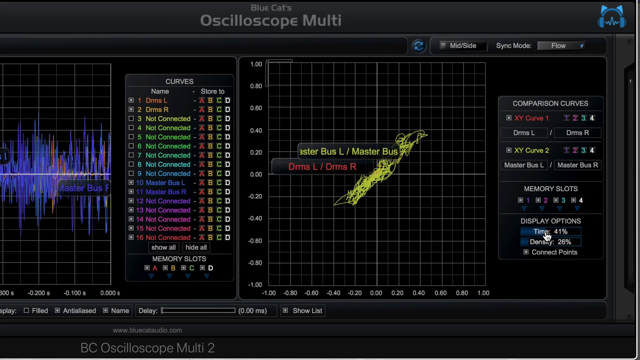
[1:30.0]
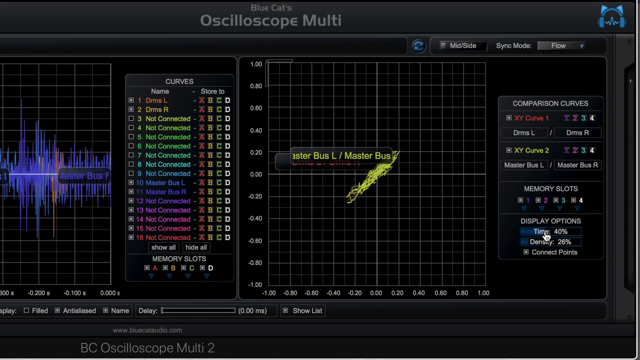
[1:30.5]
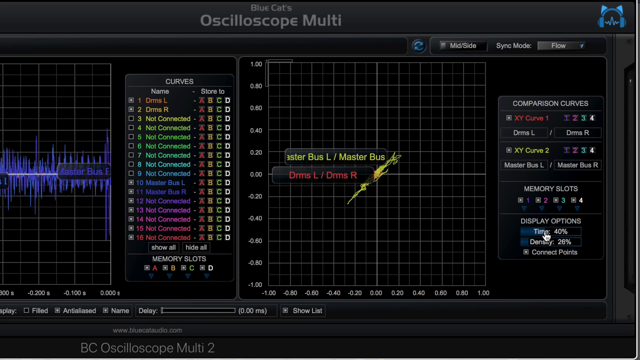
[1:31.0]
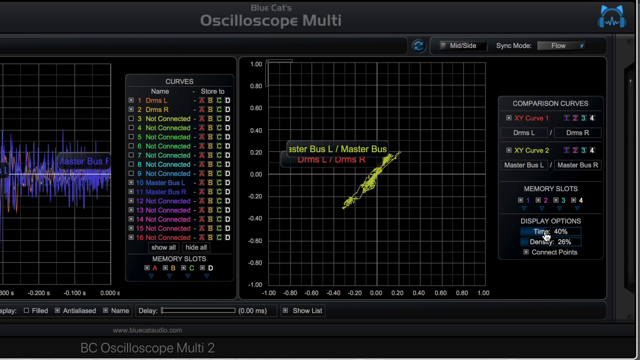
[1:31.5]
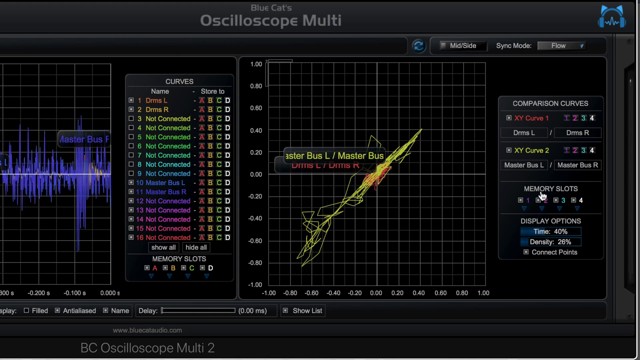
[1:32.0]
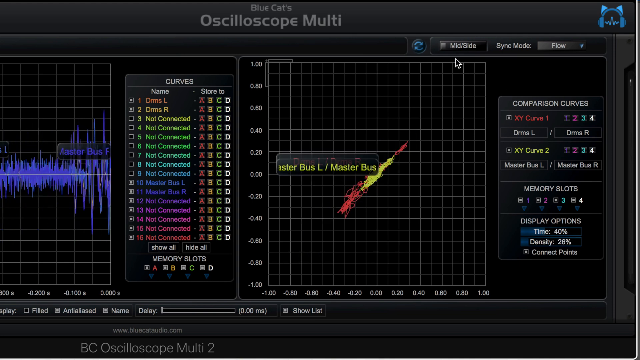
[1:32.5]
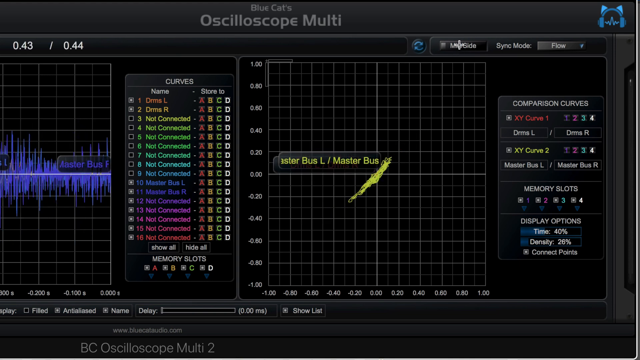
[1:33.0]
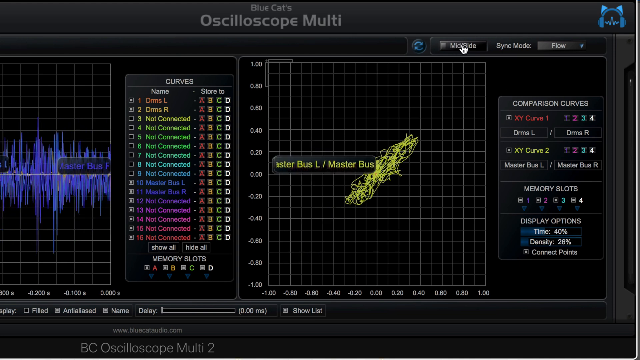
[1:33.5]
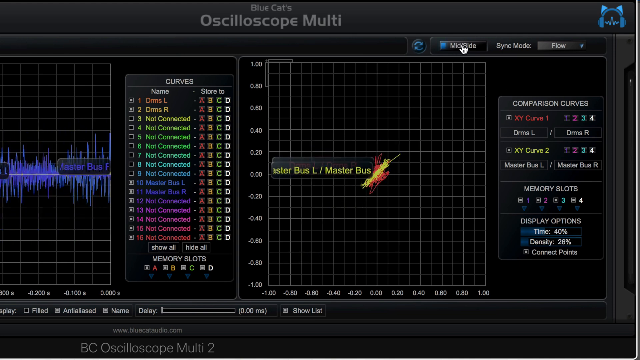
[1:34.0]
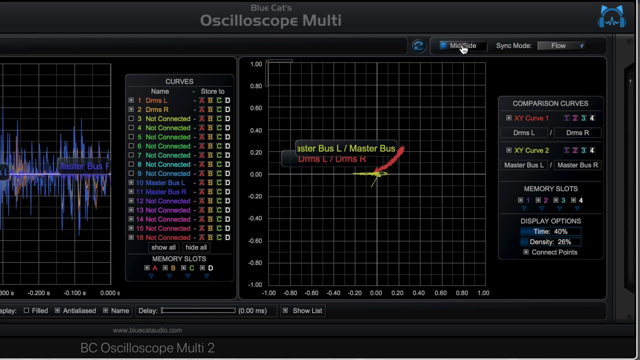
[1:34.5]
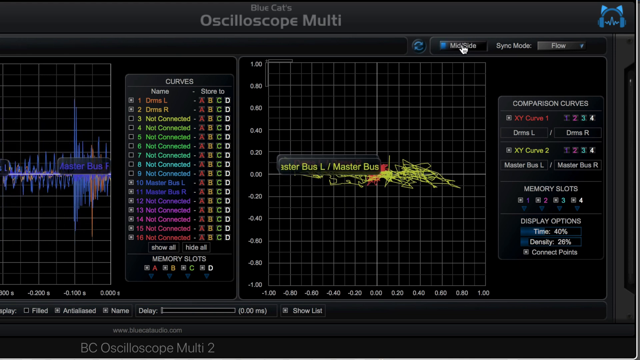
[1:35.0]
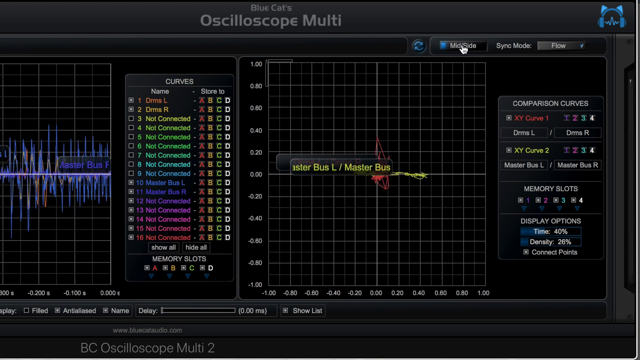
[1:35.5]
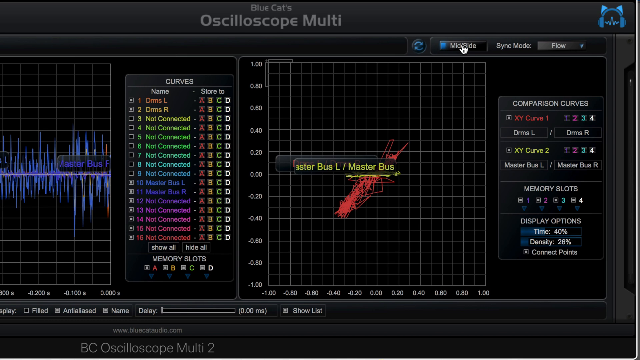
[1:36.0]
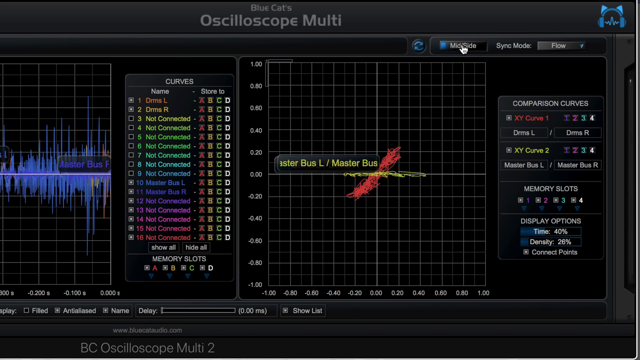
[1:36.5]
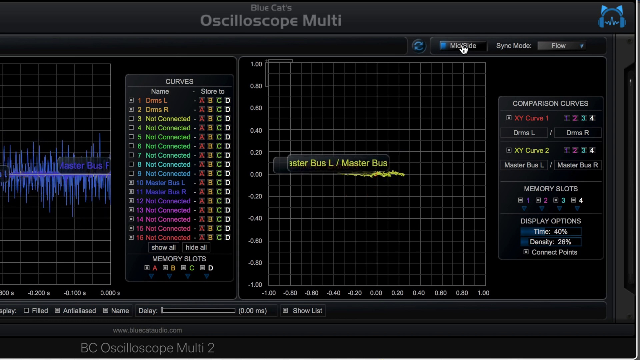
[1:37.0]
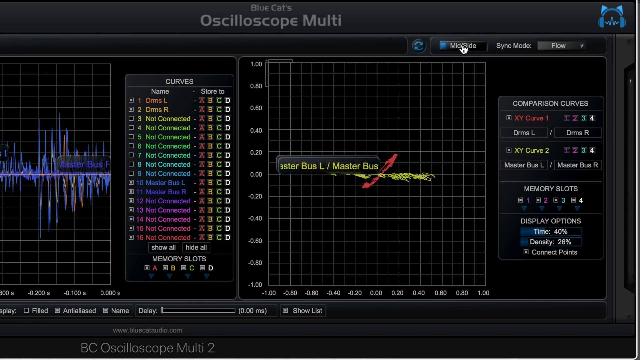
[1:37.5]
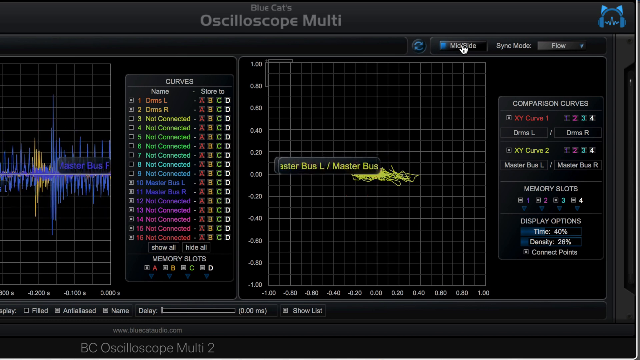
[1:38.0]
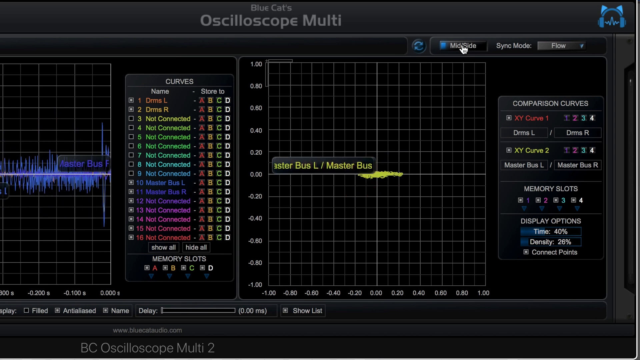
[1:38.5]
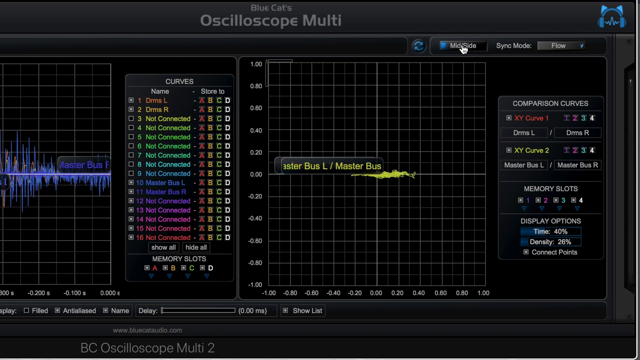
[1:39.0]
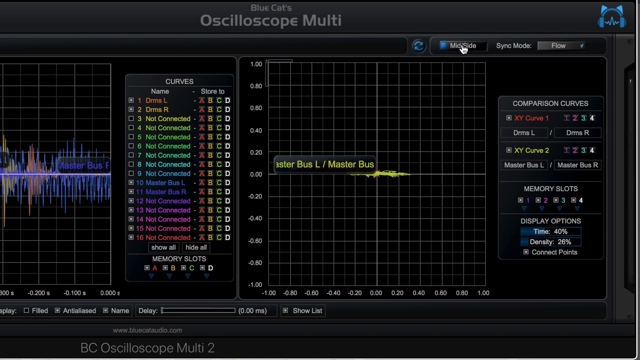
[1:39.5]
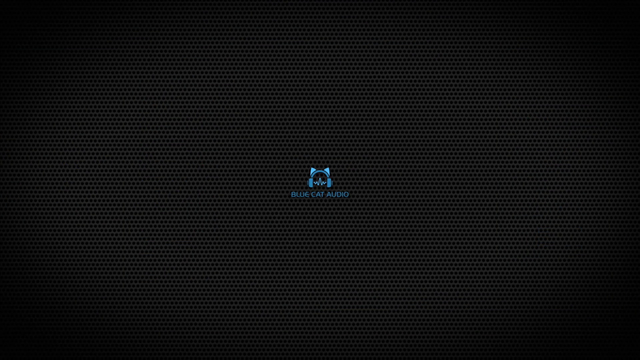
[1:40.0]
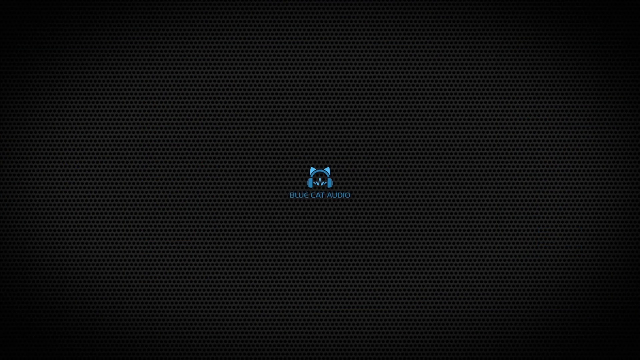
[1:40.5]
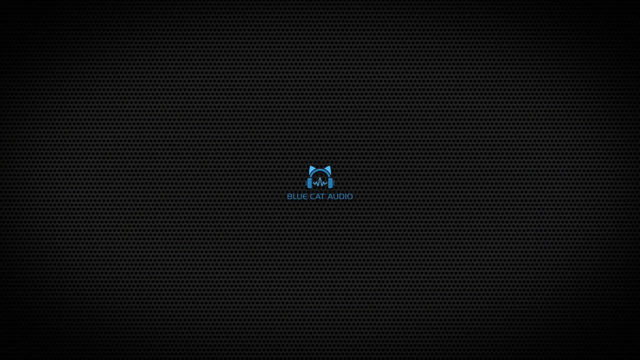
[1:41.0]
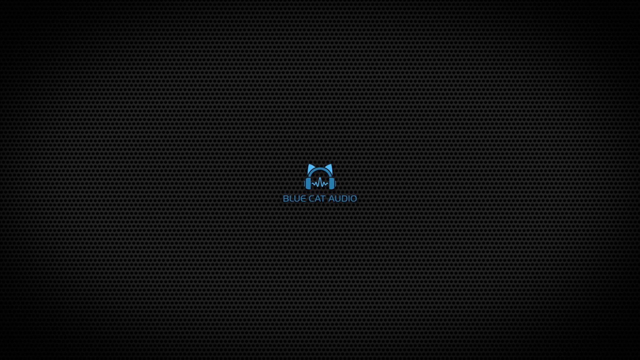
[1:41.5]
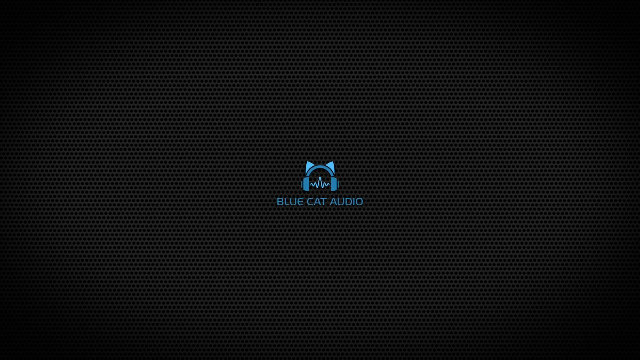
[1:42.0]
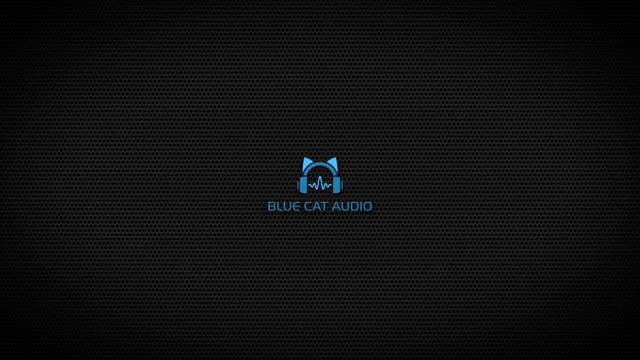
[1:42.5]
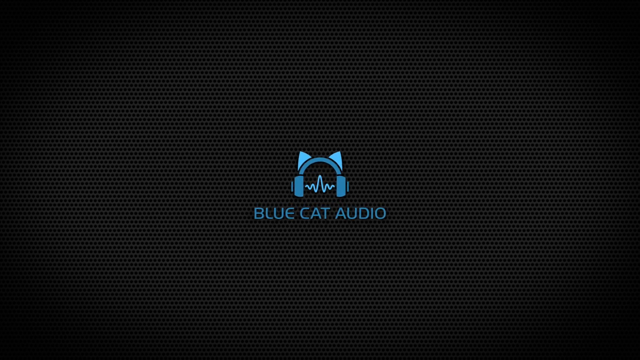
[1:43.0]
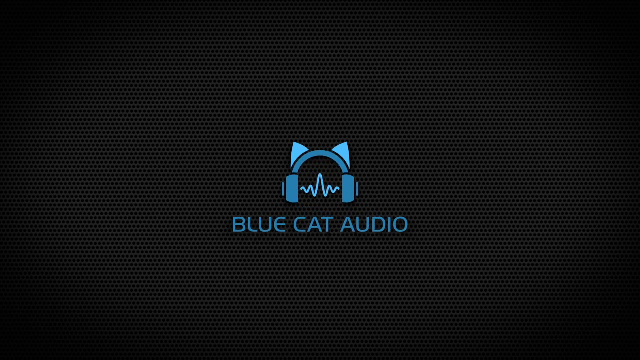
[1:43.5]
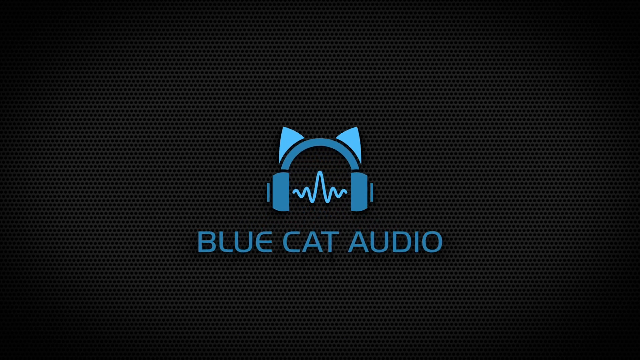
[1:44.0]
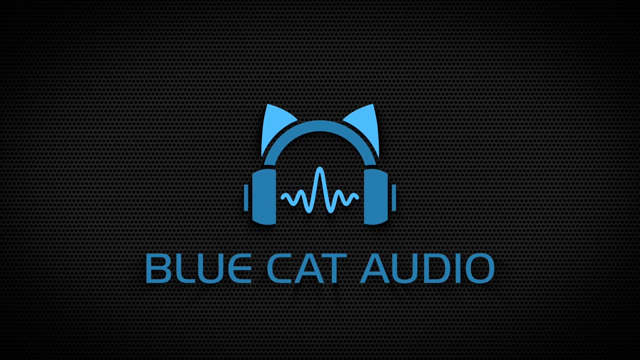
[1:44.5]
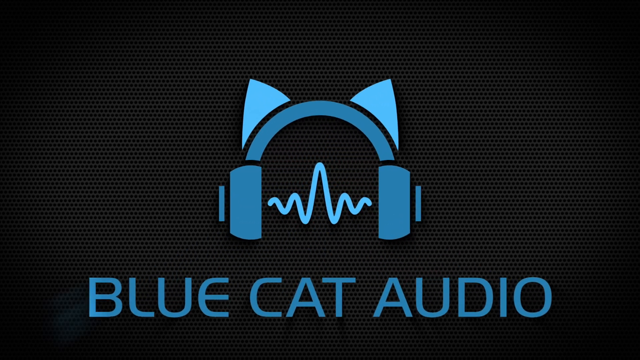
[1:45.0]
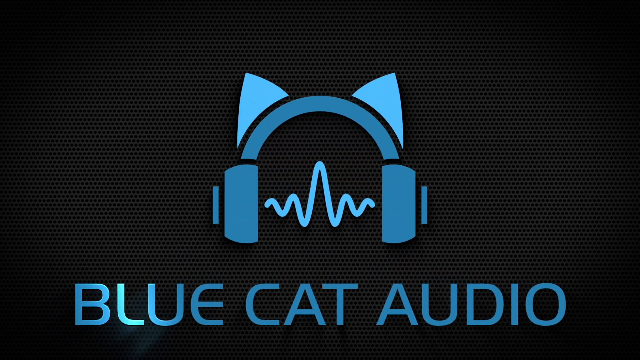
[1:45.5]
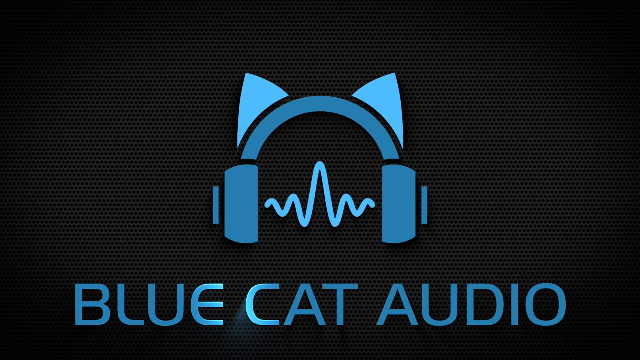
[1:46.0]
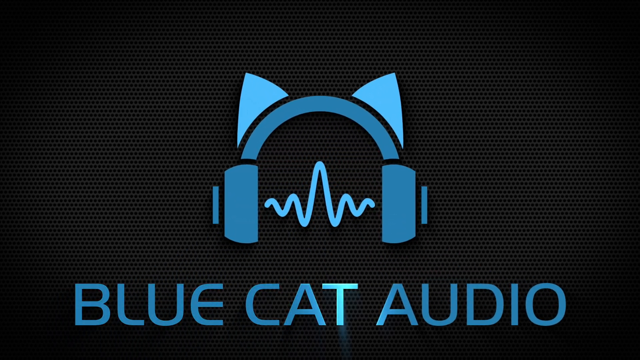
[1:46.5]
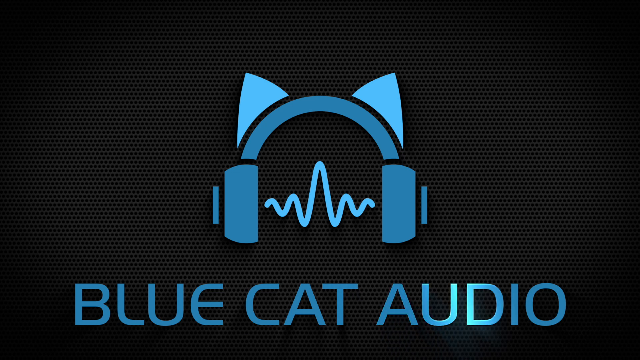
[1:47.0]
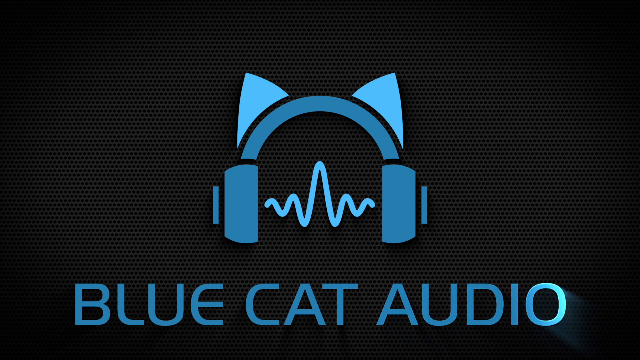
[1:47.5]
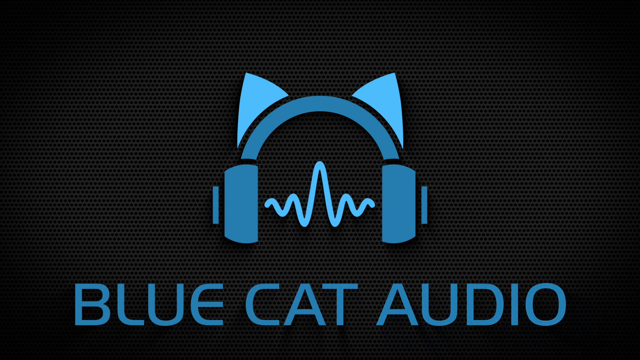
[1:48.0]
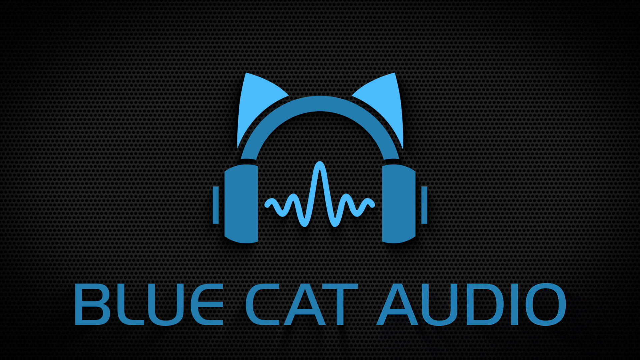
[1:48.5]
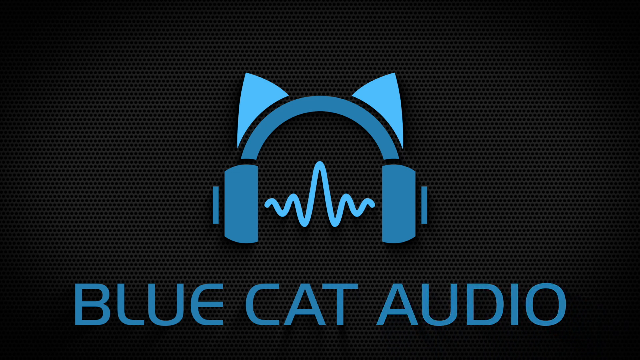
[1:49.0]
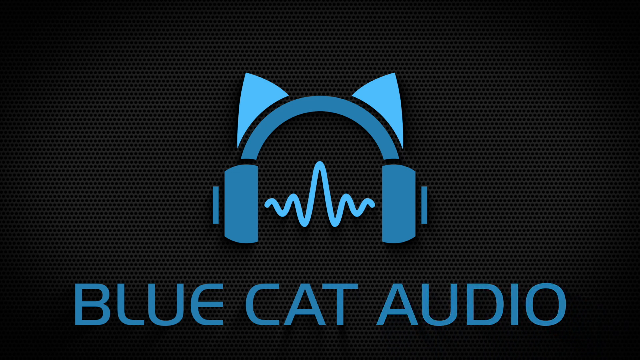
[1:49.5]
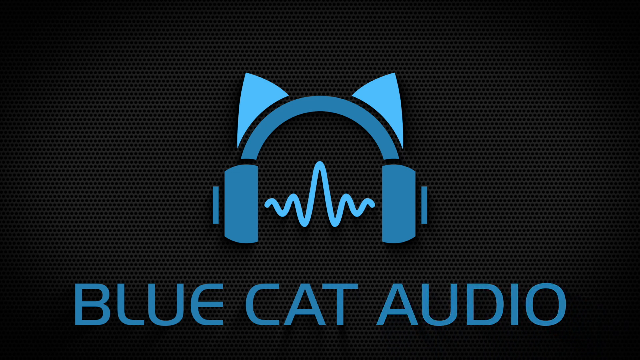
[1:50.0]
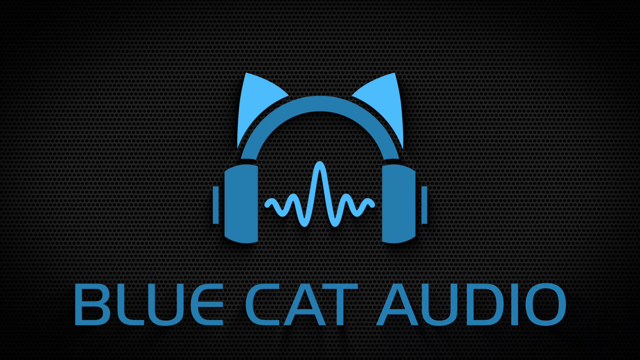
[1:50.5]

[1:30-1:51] The oscilloscope multi appears again with different colors, some pink and purple, and then it stops. A Blue Cat Audio logo appears: a pair of headphones with cat ears and a frequency line through the middle, with text reading "Blue Cat Audio Multi-Series Plugins, Frequent Analysis Multi." It moves into a chart of all blue writing, which stays only briefly before panning away, unreadable. The view then scrolls through different screens with different colors of frequencies, mostly pink and yellow. It switches to the Stereoscope Multi, where "Curves Routing" is clicked, bringing up the curves menu in orange, pink, green, blue and purple. Next comes a screen in red and black, then the oscilloscope multi showing the bass and treble. Another screen follows with a couple of grid-pattern squares that have yellow and pink going through them; they vibrate, going from yellow to pink and then partially pink and yellow. Finally the Blue Cat Audio symbol comes back and moves toward the viewer until it is big and stops right in front.